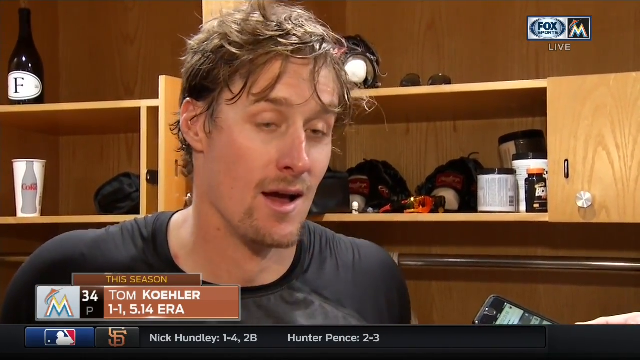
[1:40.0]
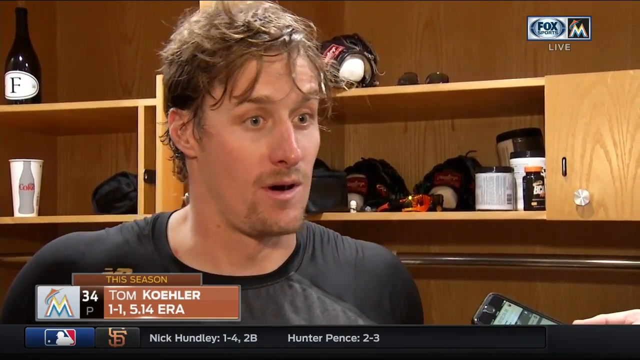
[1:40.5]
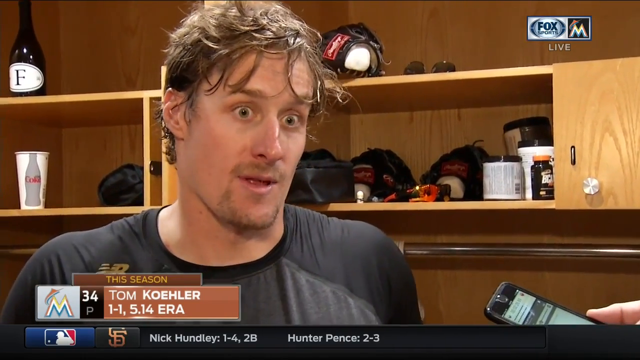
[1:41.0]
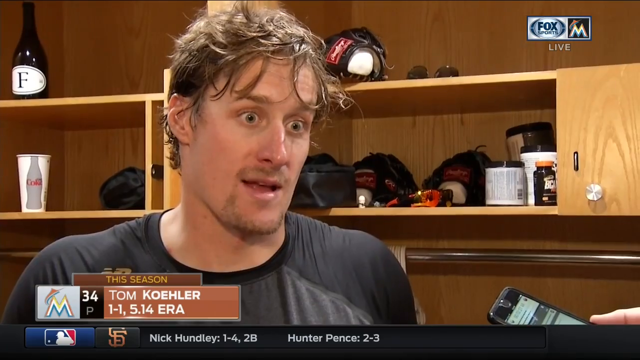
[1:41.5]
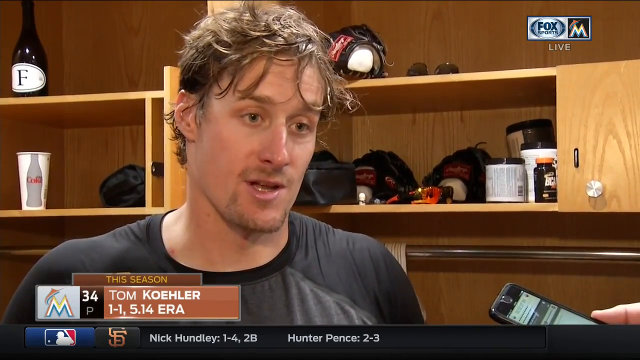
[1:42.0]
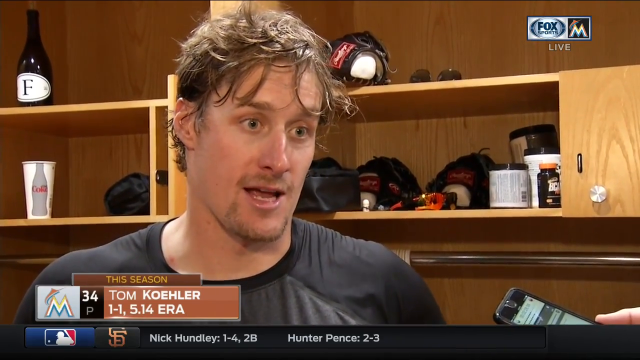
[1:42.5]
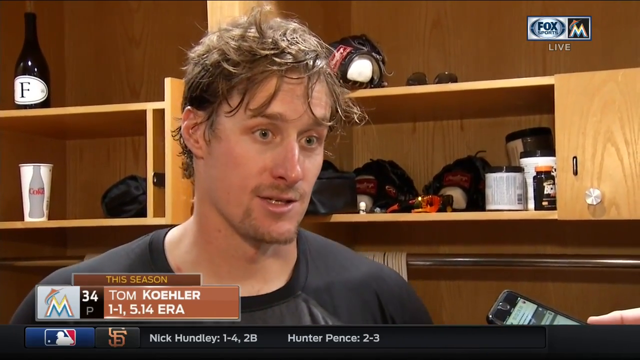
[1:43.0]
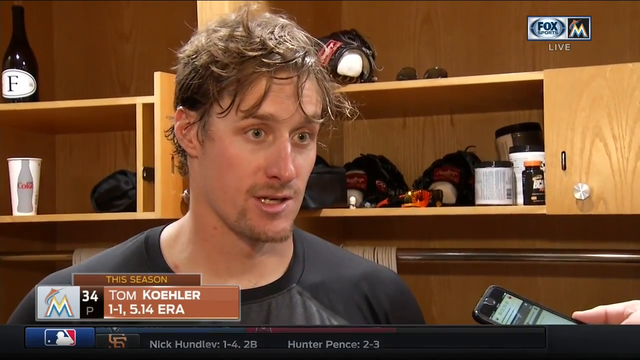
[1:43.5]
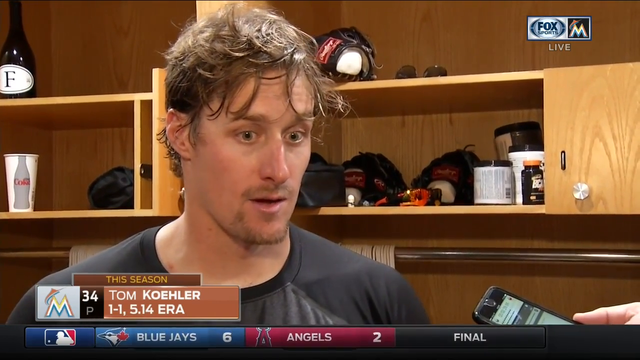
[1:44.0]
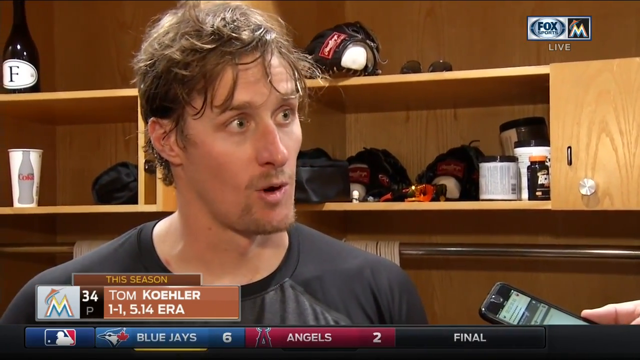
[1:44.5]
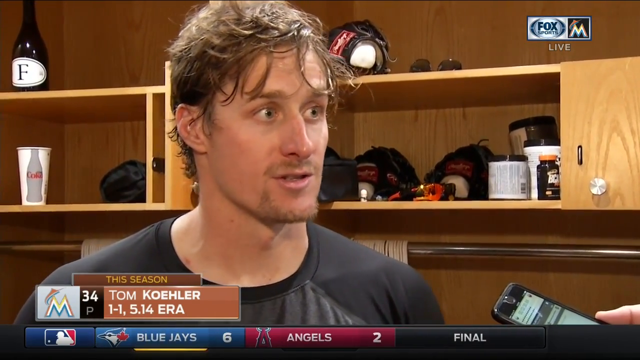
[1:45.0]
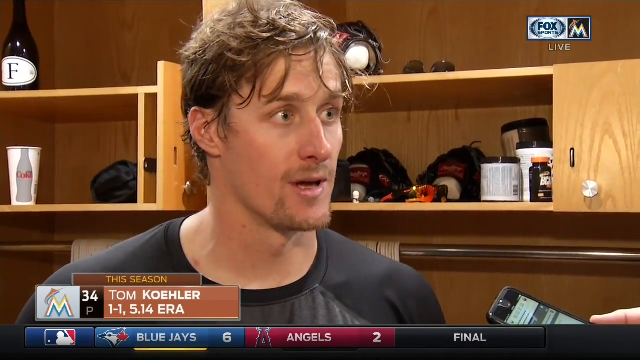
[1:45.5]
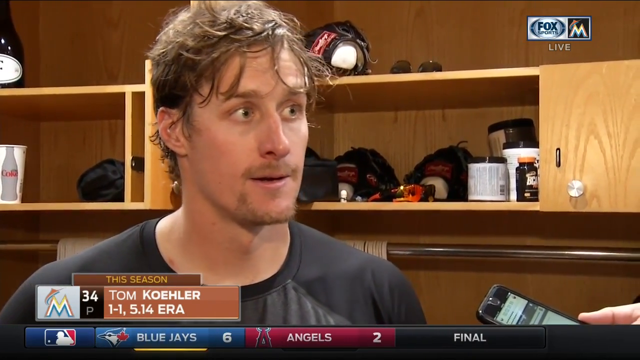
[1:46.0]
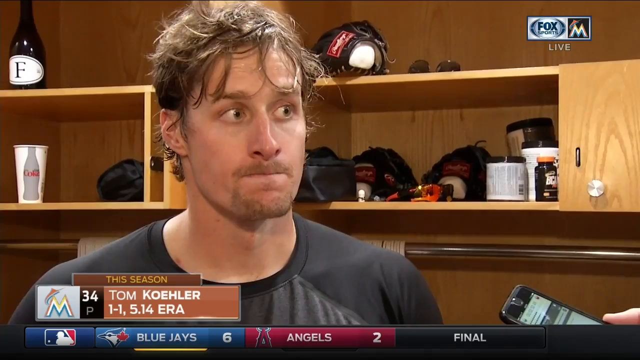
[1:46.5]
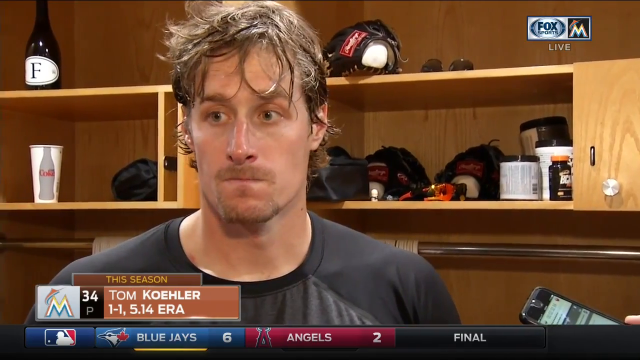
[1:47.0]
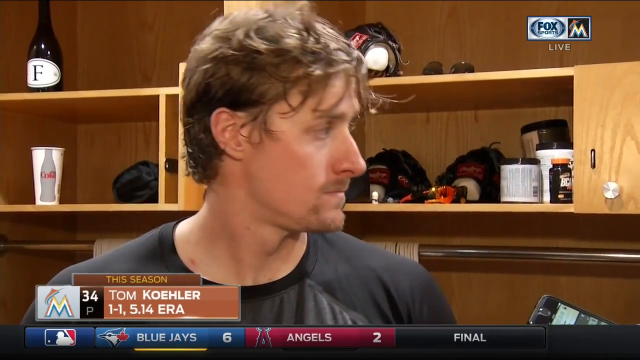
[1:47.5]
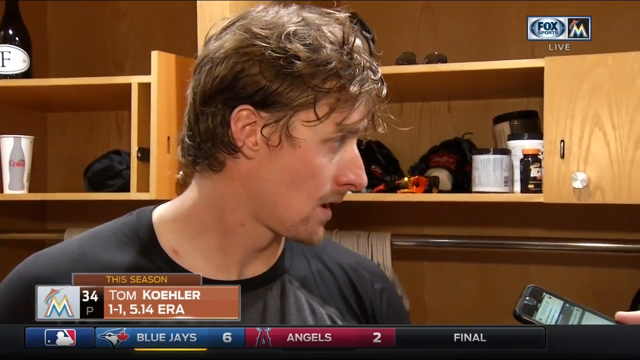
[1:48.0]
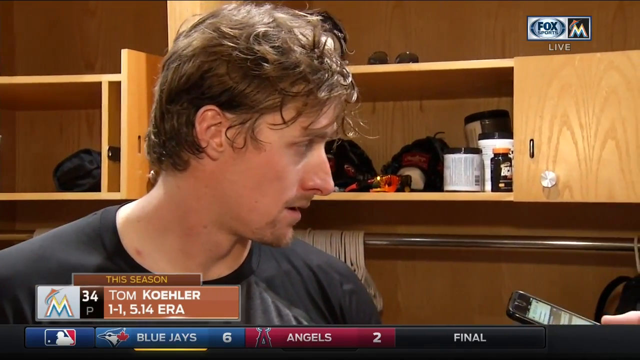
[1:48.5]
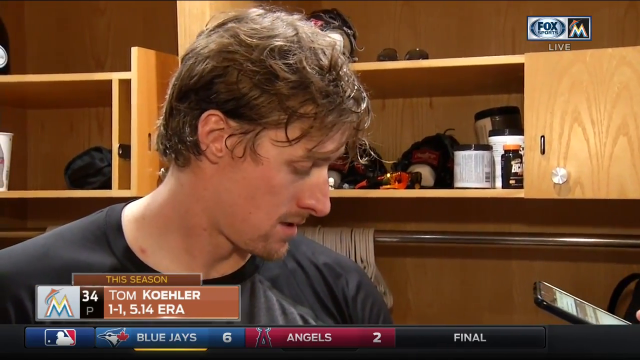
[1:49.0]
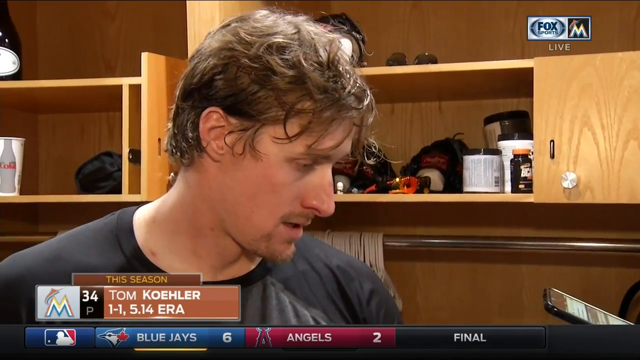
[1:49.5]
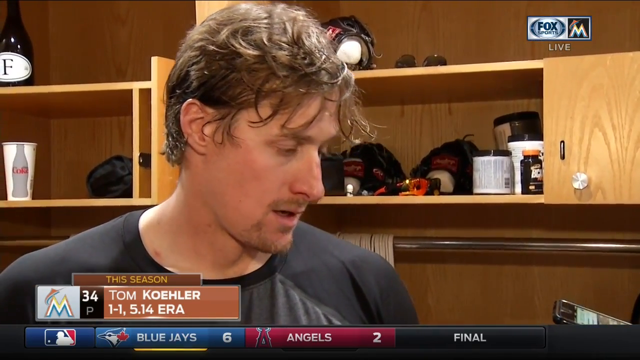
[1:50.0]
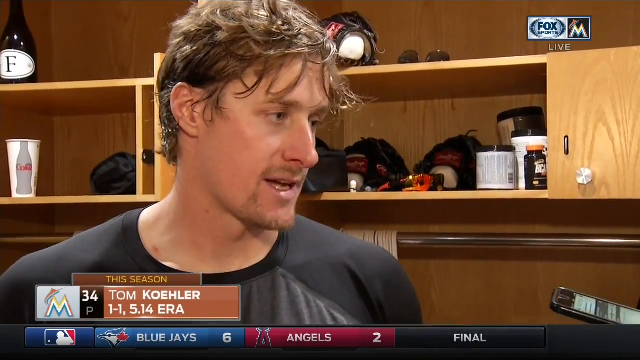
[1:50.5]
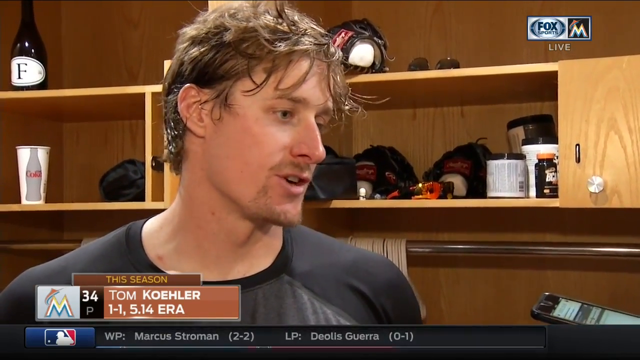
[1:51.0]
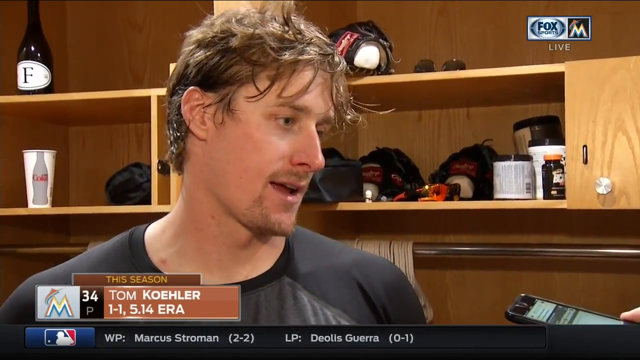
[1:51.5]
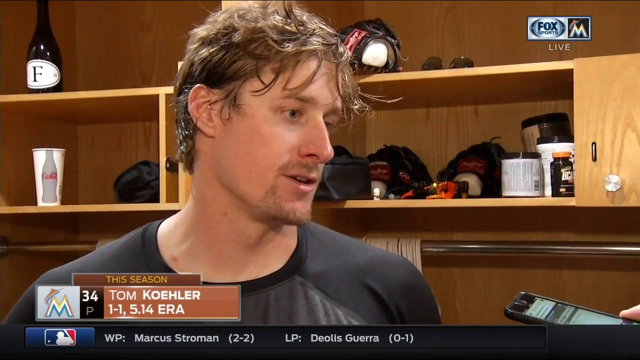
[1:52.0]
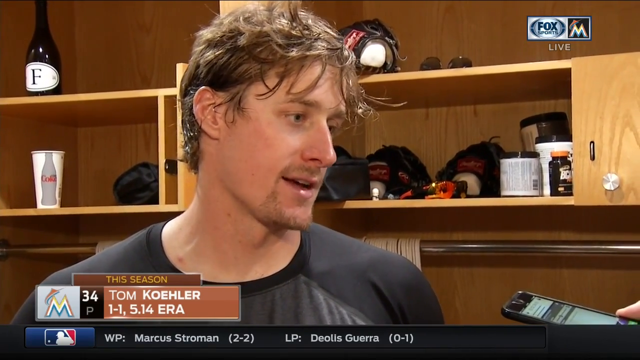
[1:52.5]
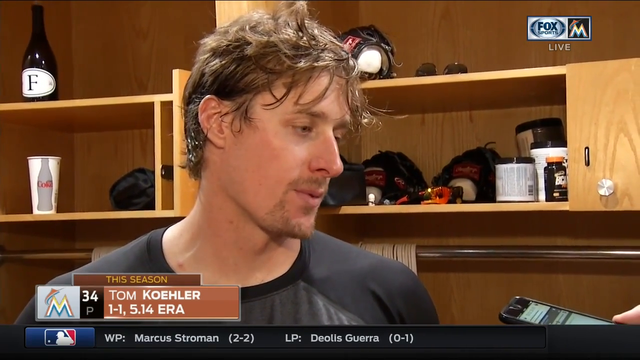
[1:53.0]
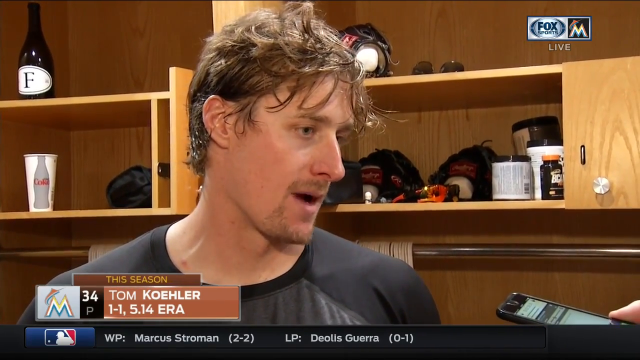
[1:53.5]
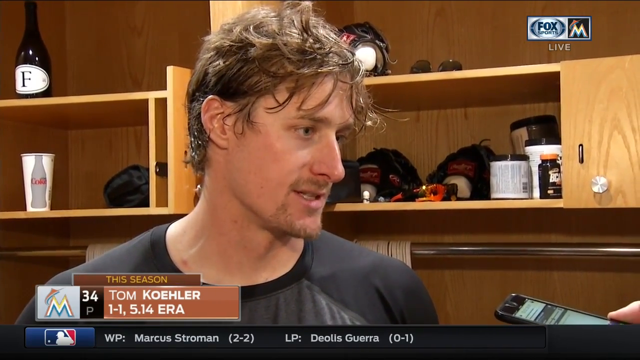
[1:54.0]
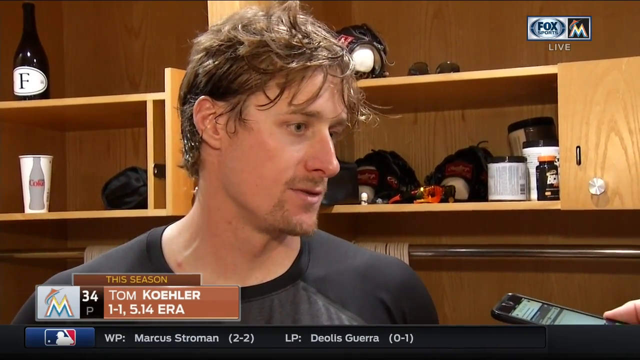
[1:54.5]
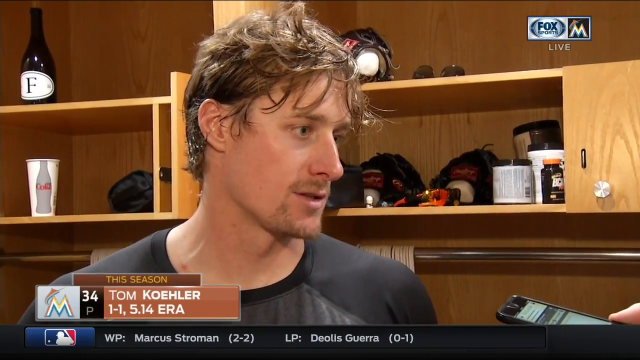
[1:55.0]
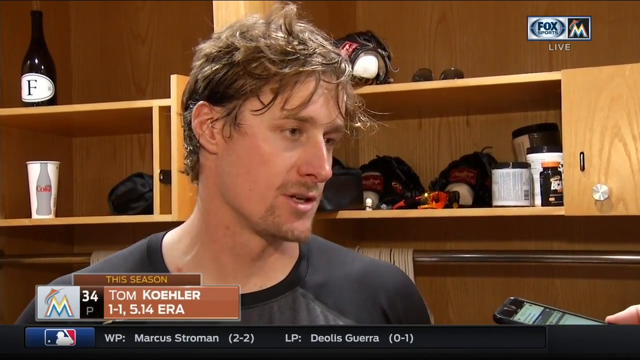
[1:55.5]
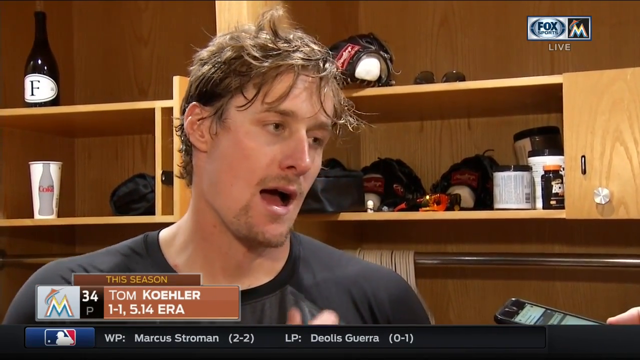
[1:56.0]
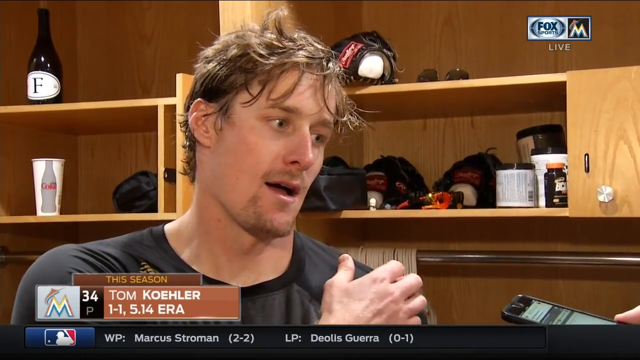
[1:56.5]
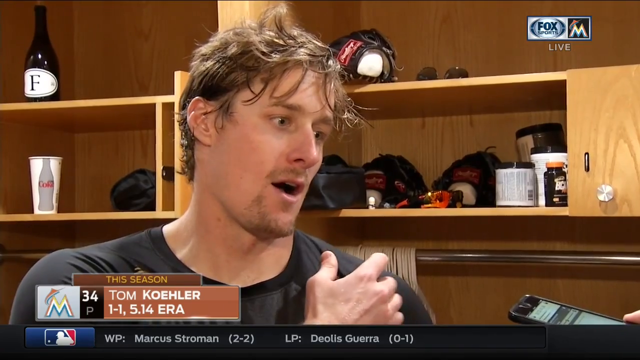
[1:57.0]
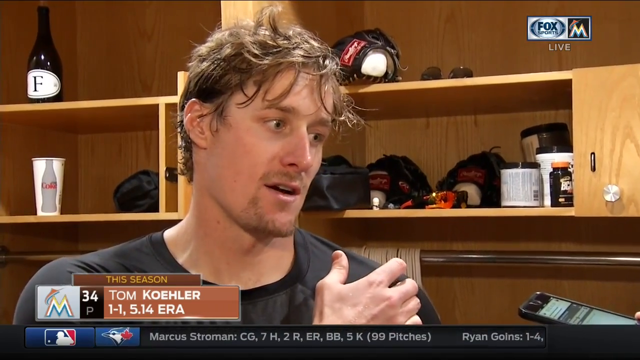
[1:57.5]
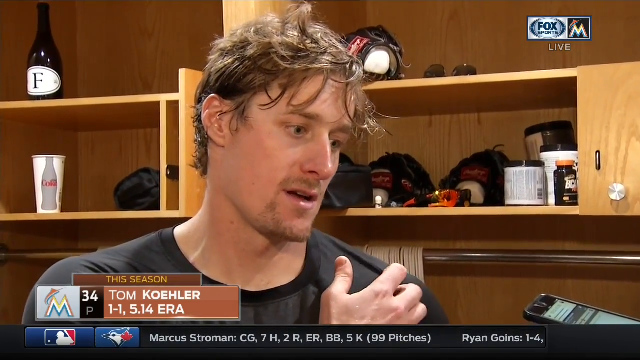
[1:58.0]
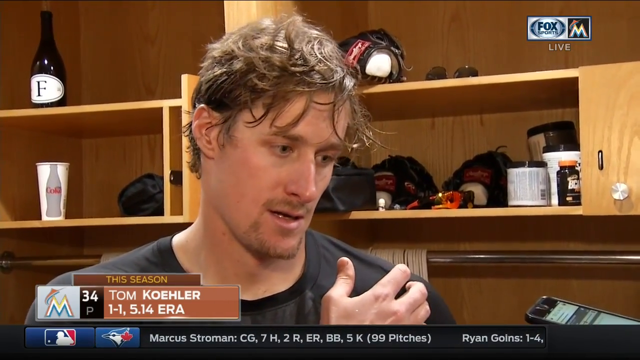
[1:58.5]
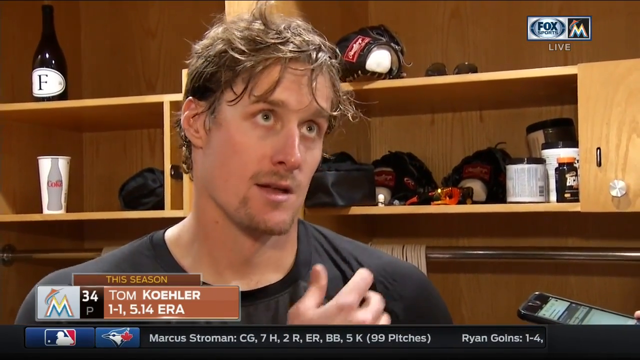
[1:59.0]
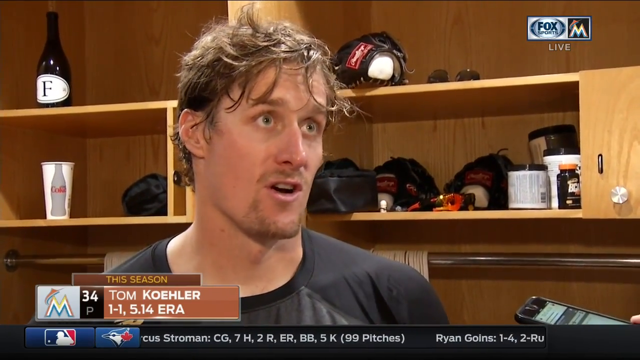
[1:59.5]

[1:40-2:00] He continues speaking to the reporter with the iPhone, which is visible. He pauses, looks to his left, and continues addressing the same reporter. He scratches his left shoulder with his right hand. His ERA and record are still up. The ticker at the bottom of the screen shows statistics from another game: Nick Hundley went one and four with a double, the final score is Blue Jays six, Angels two, the winning pitcher is Marcus Stroman, 2-2, and the losing pitcher is Tolos Guerra. The camera is a little shaky, moving from left to right horizontally. The shot is still from the shoulders up, so it remains unclear whether he wears a long-sleeved shirt or a t-shirt.